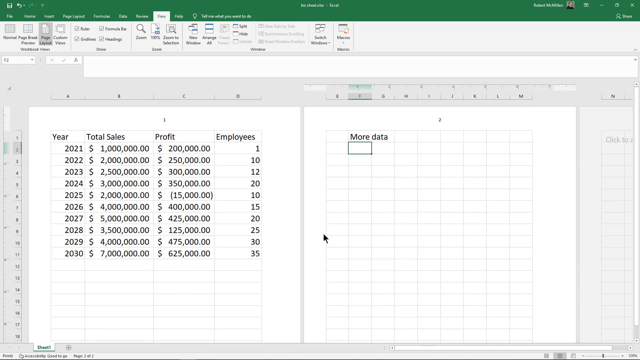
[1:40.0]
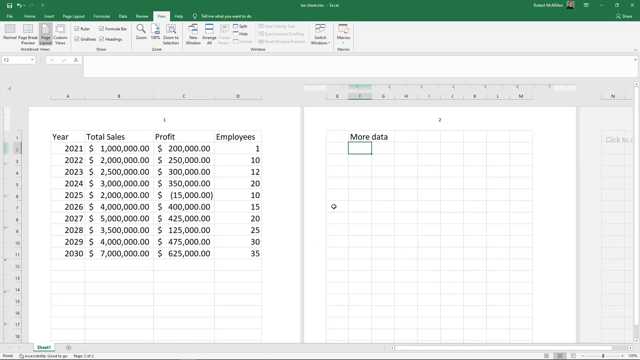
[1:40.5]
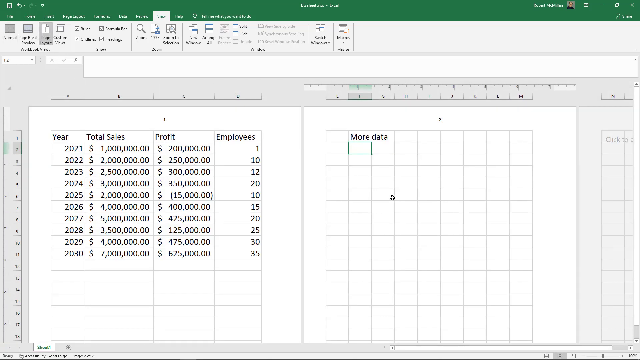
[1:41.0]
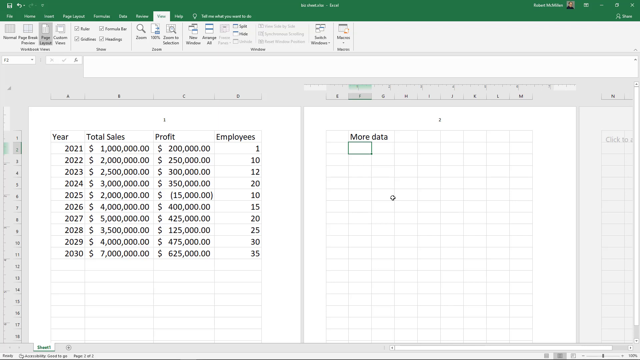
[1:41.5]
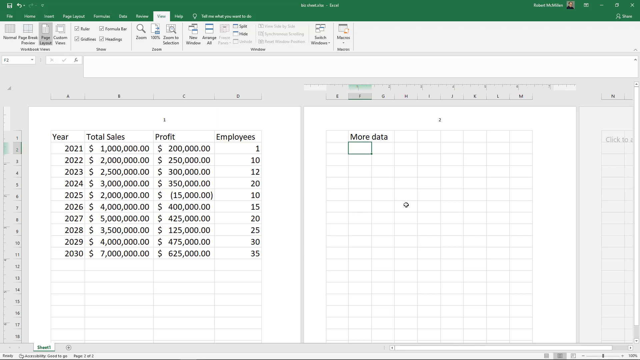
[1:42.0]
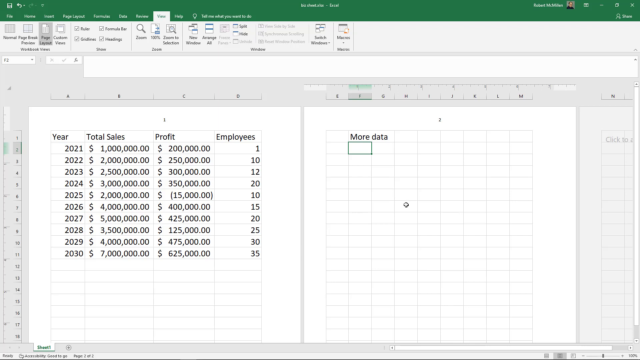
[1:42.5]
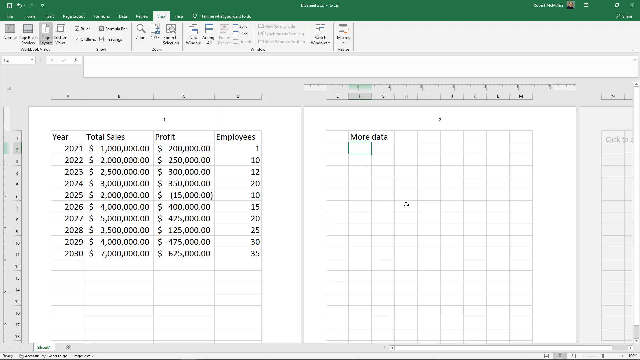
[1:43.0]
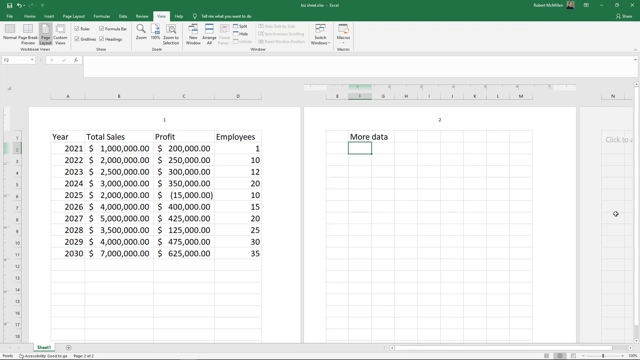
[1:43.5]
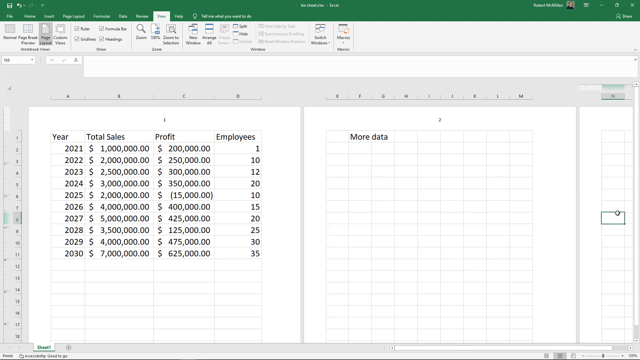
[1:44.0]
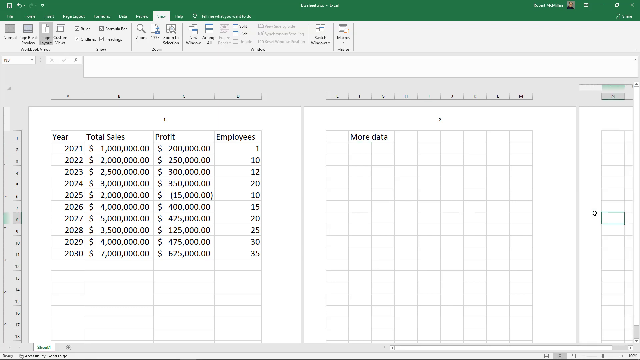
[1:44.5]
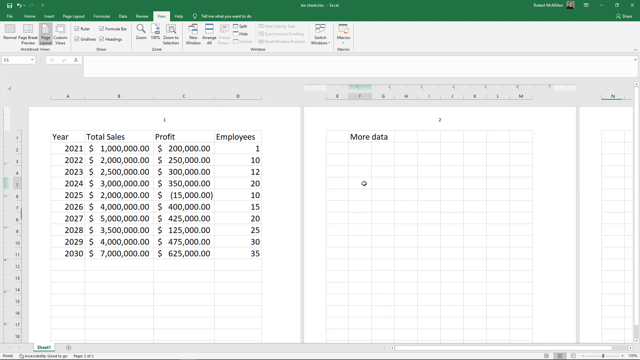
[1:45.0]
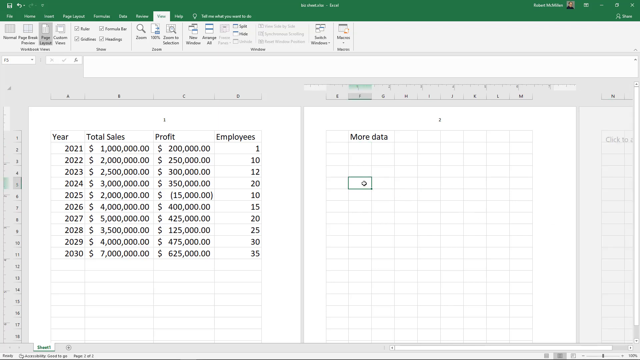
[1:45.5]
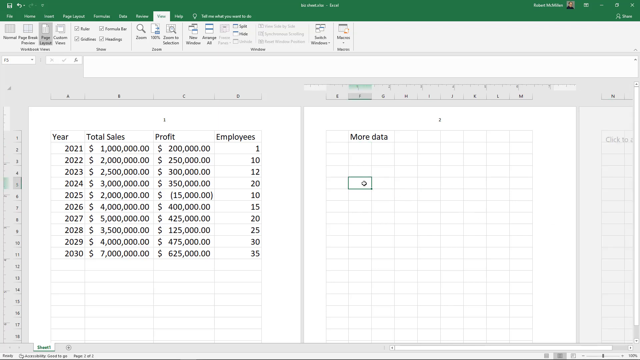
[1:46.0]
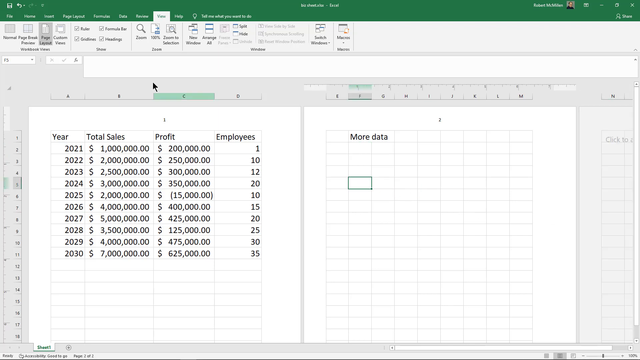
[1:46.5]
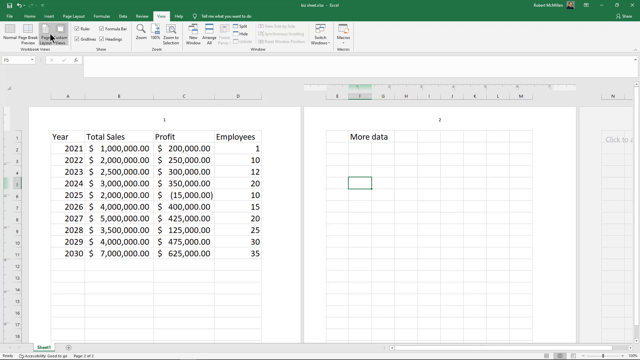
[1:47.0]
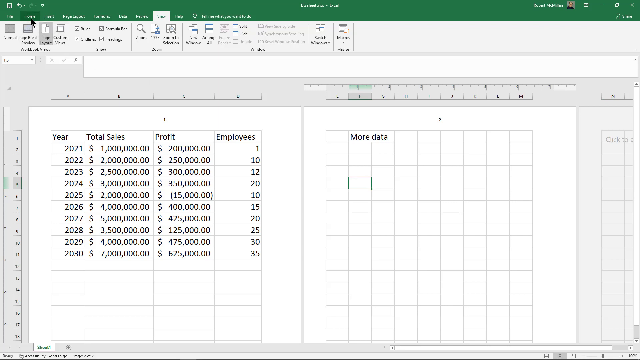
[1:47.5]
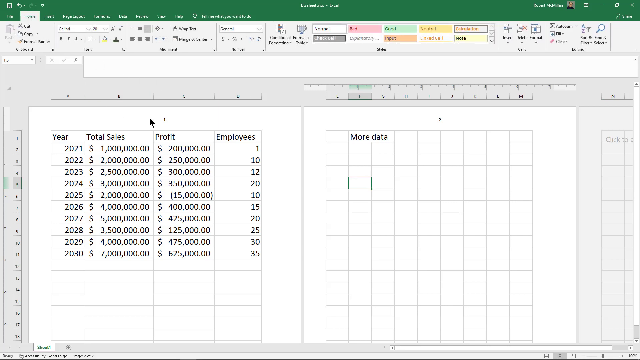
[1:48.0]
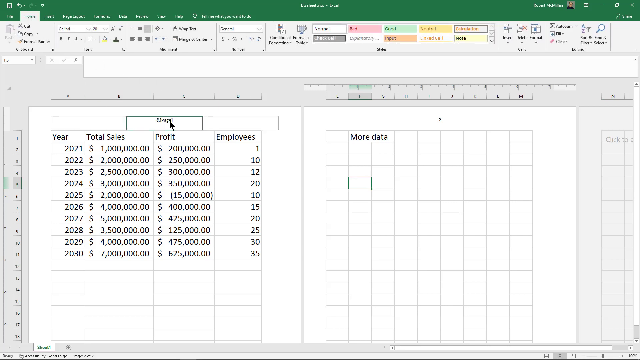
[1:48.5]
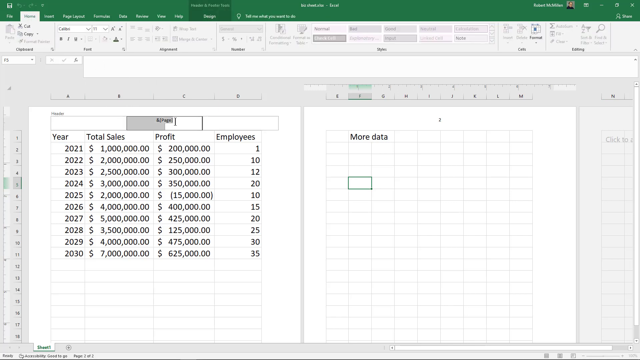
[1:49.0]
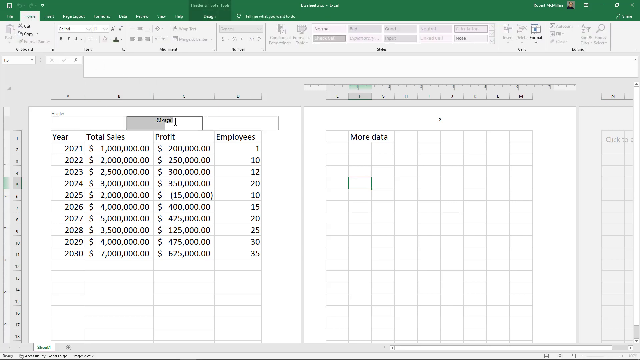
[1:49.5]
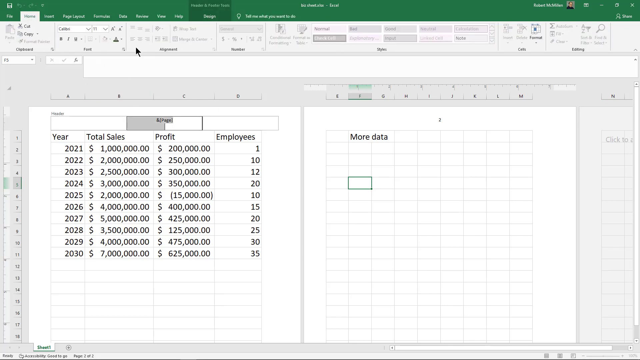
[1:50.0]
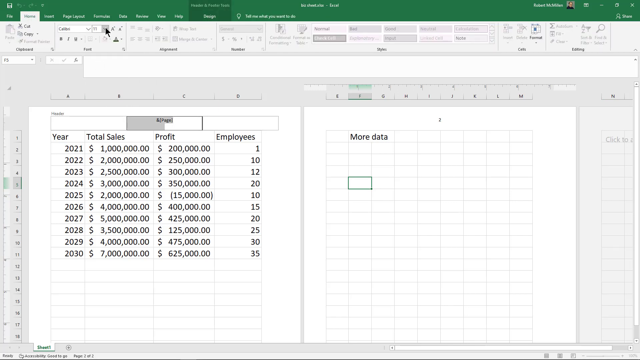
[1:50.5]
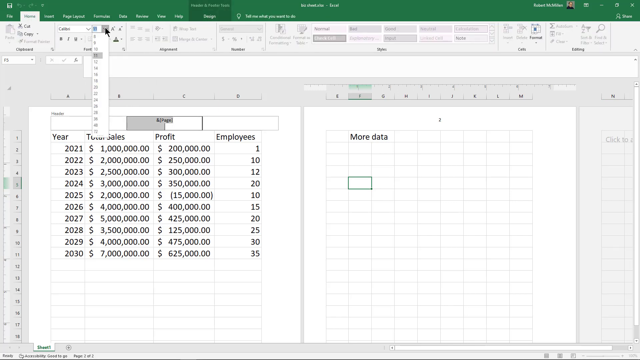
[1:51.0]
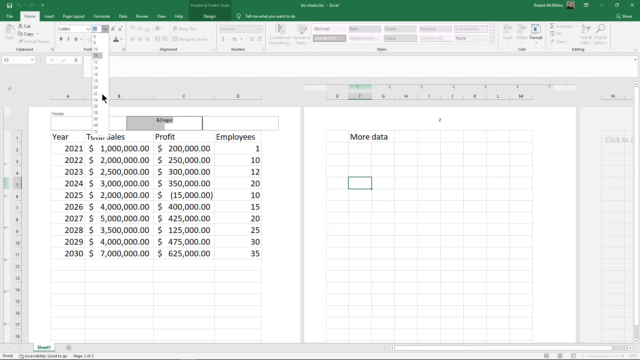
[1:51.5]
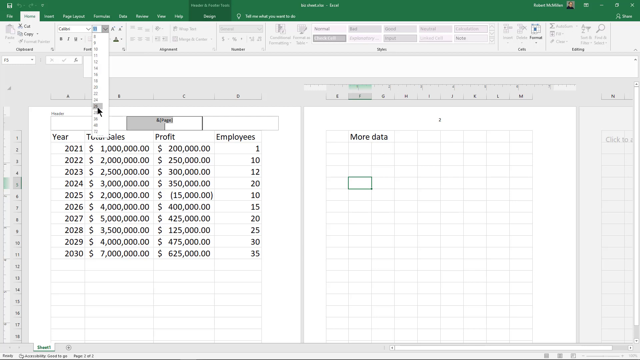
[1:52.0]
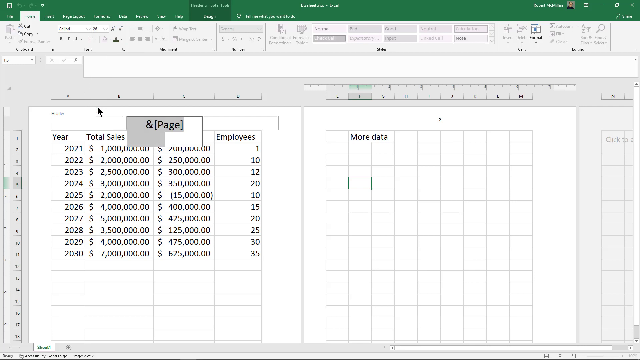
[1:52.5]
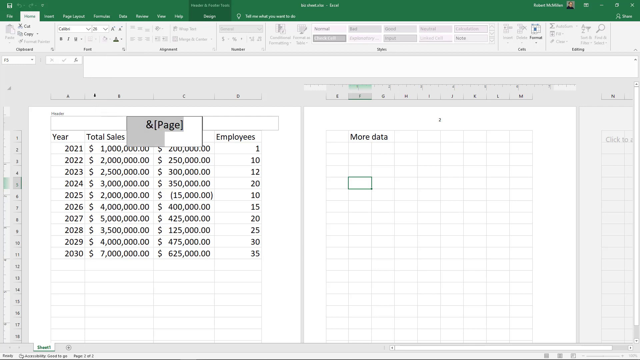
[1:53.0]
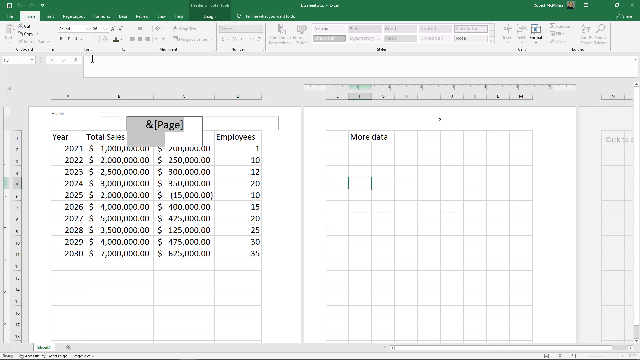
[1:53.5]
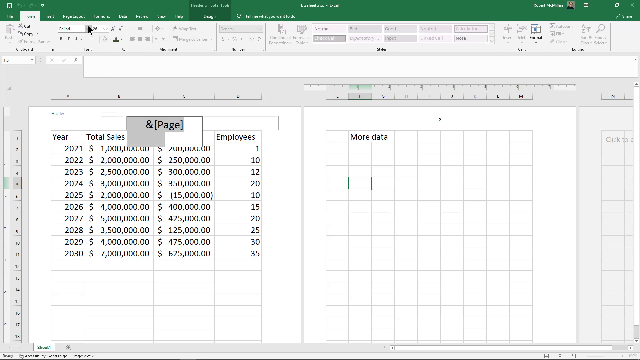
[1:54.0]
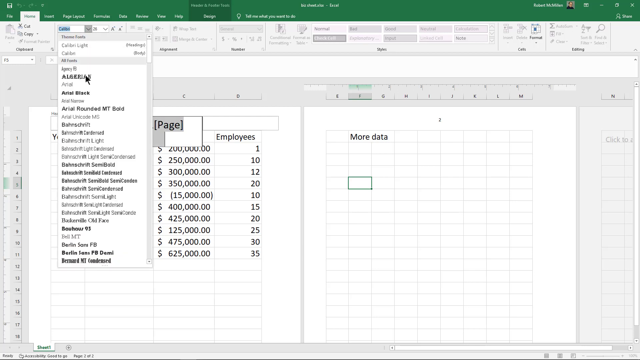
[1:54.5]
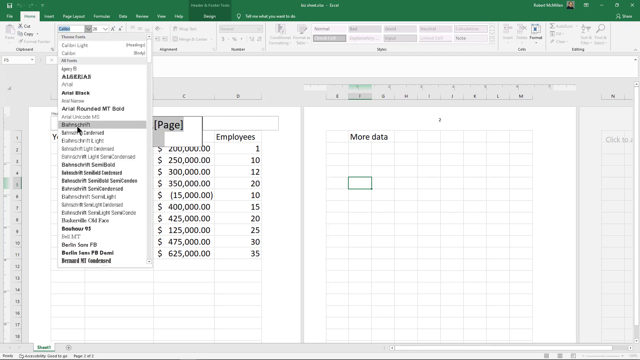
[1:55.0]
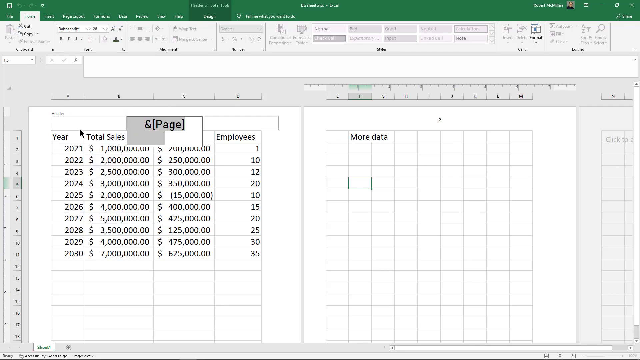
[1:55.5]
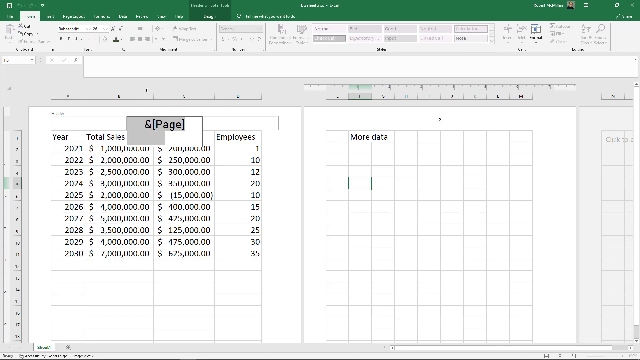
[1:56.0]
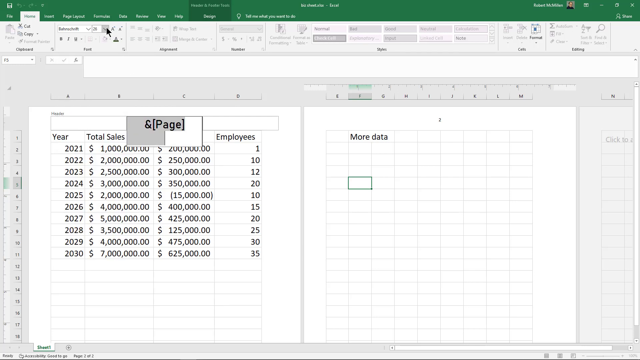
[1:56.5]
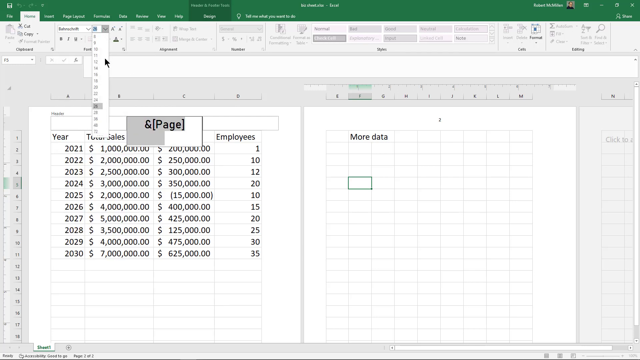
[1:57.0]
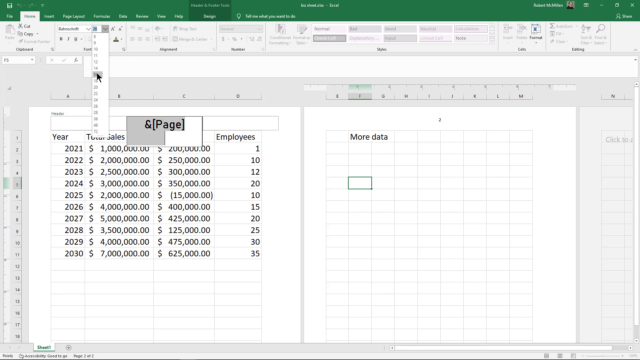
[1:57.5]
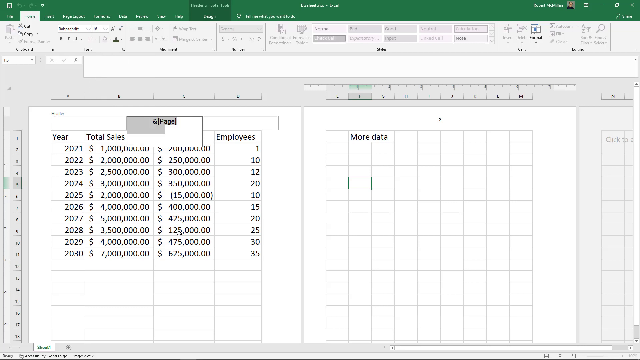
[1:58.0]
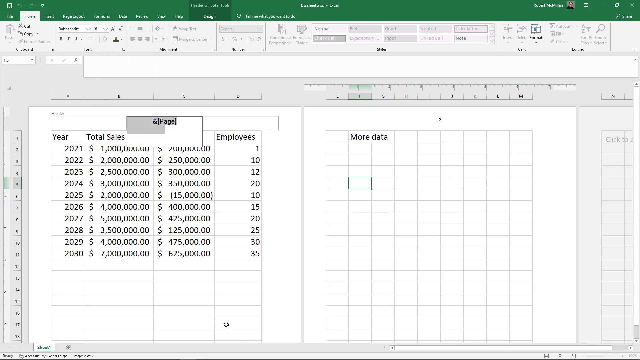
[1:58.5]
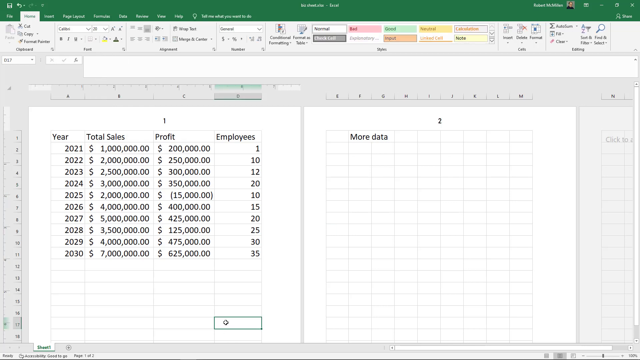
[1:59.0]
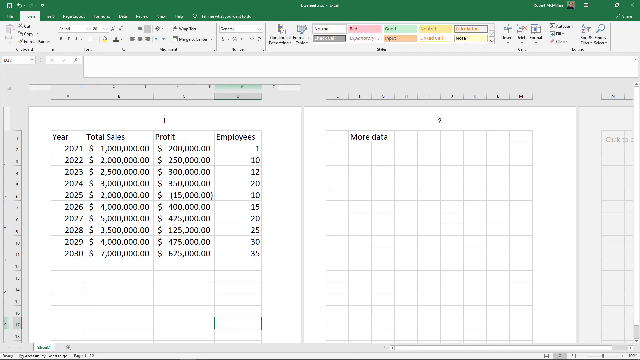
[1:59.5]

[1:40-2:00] A spreadsheet is divided into two sheets. The left one has a lot of data entered from line 1 to 11, while the sheet on the right has only one category typed in, "more data" at the top, and the rest is completely blank. The user moves the cursor around, and there seems to be a third spreadsheet on the right that is kind of cropped. The user goes back to the second spreadsheet, clicks an option at the top of the screen on a green menu with white text, and clicks one of the tabs. They click on the header of the first spreadsheet, open a drop-down menu at the top of the screen and select a number, which seems to enlarge the header. They then click another drop-down menu and select another option, seemingly a different size, and the header shrinks to a smaller size.